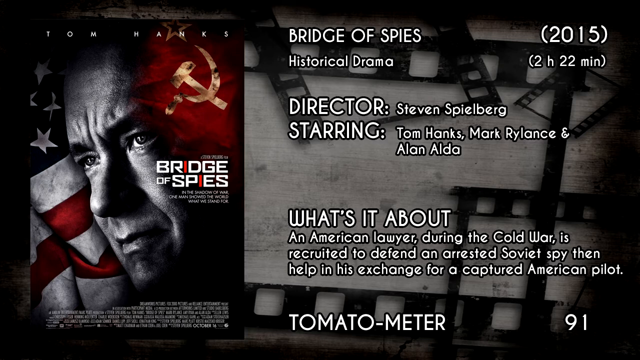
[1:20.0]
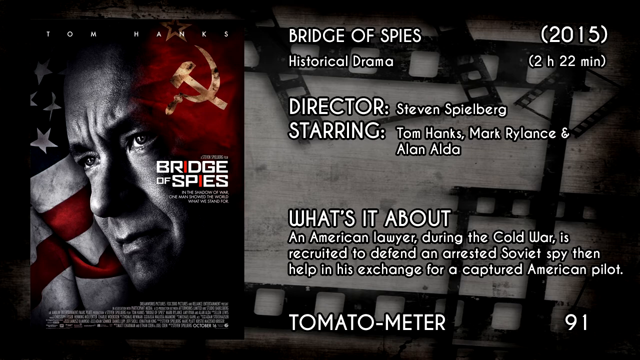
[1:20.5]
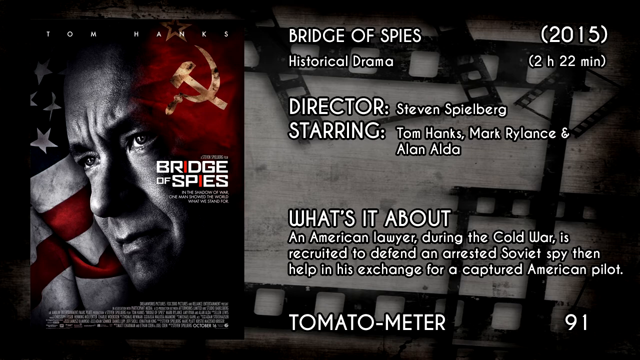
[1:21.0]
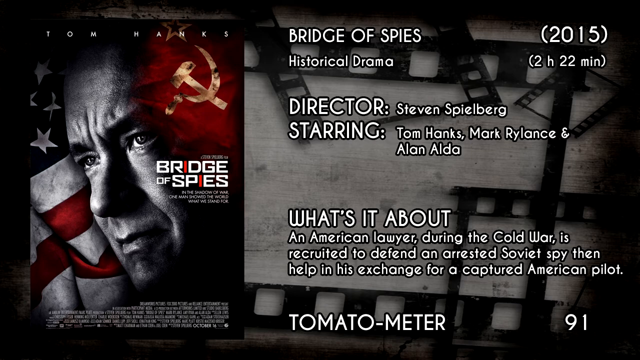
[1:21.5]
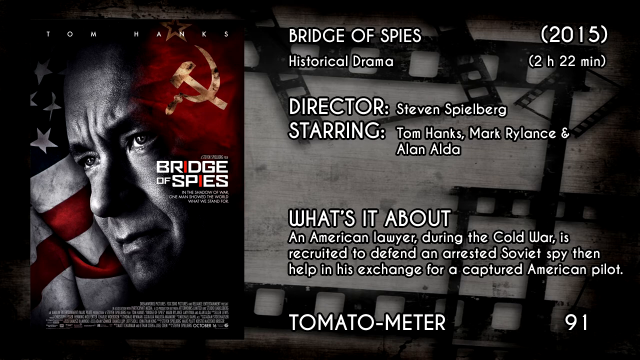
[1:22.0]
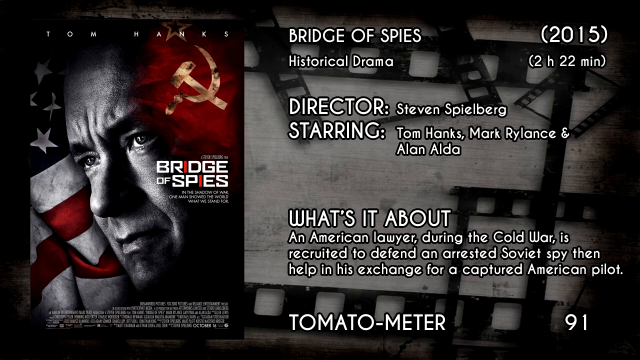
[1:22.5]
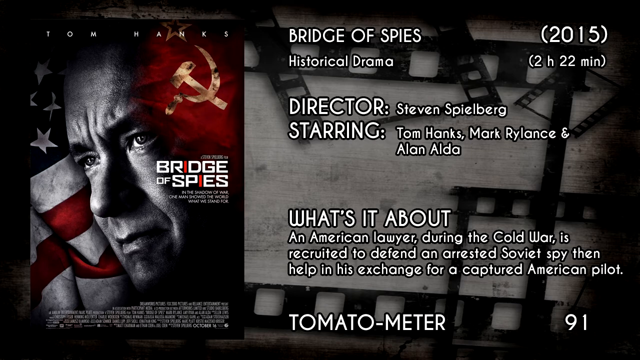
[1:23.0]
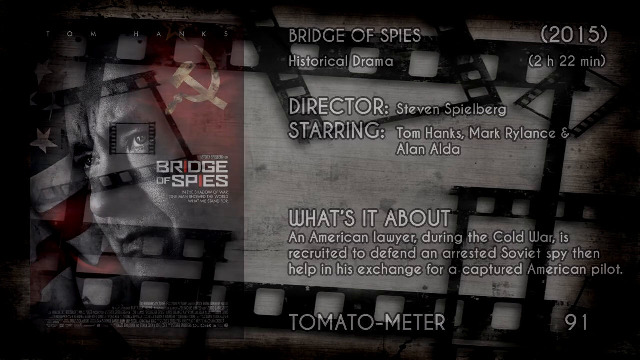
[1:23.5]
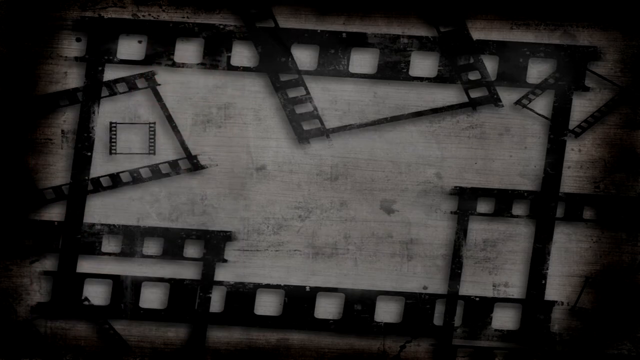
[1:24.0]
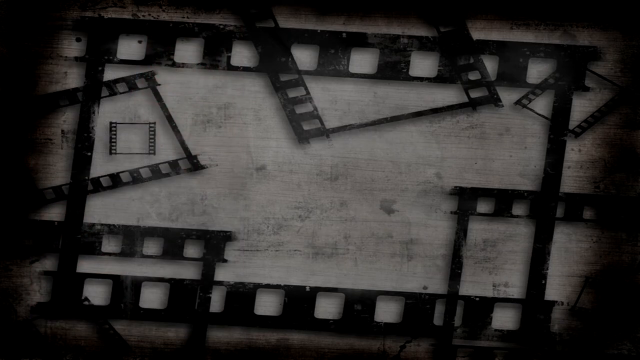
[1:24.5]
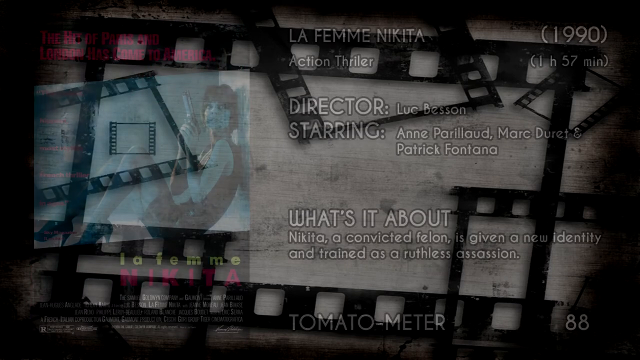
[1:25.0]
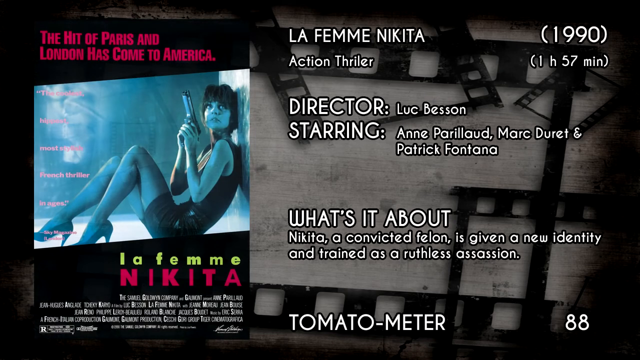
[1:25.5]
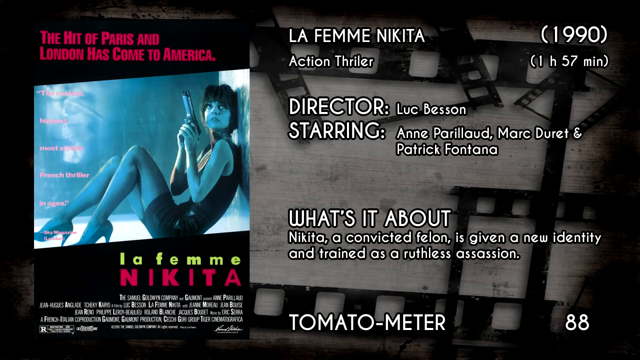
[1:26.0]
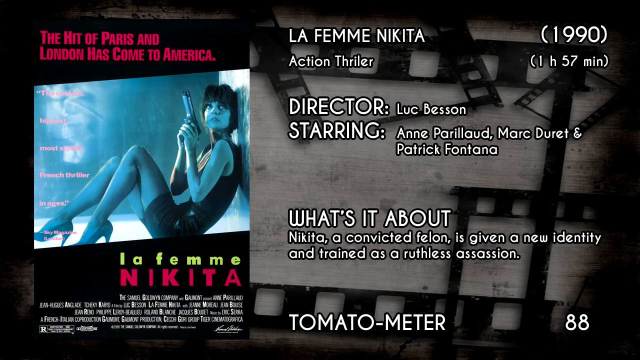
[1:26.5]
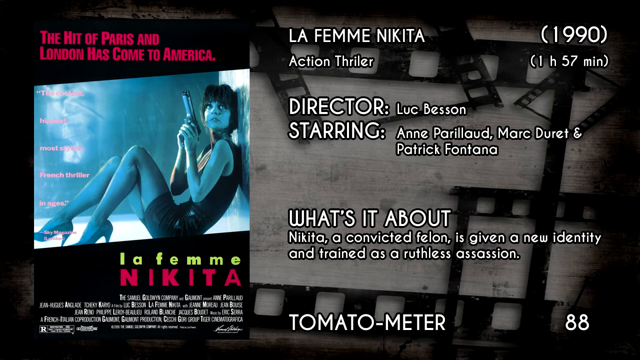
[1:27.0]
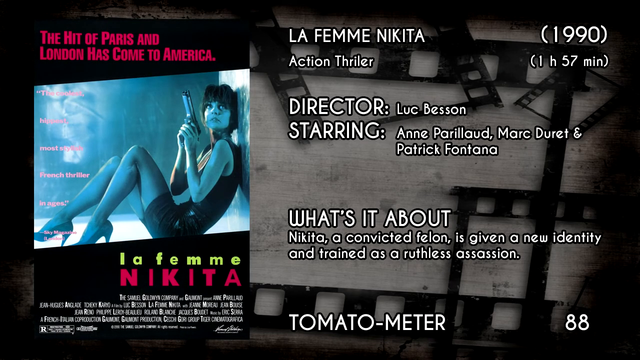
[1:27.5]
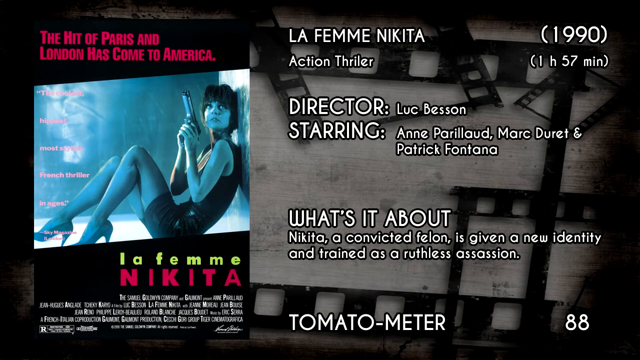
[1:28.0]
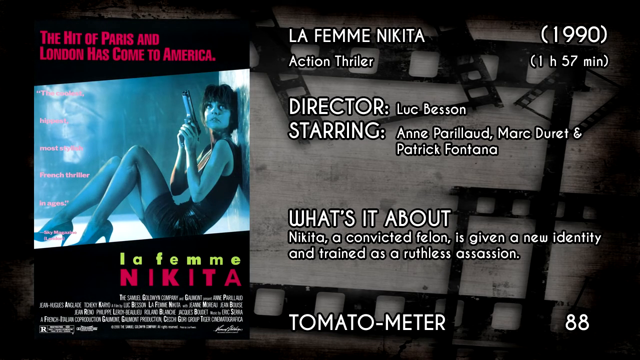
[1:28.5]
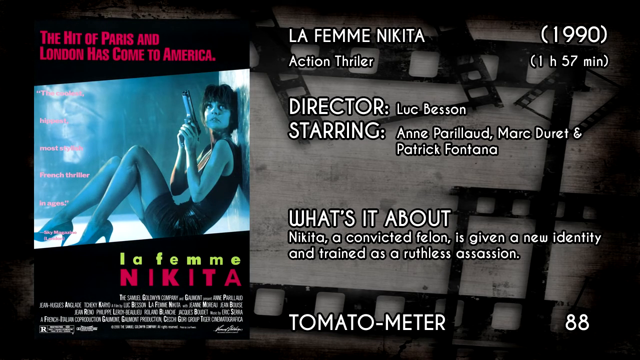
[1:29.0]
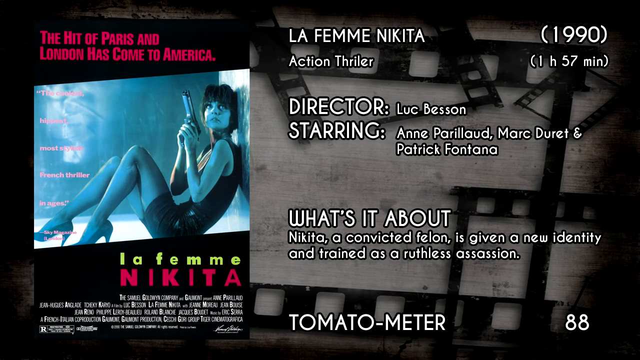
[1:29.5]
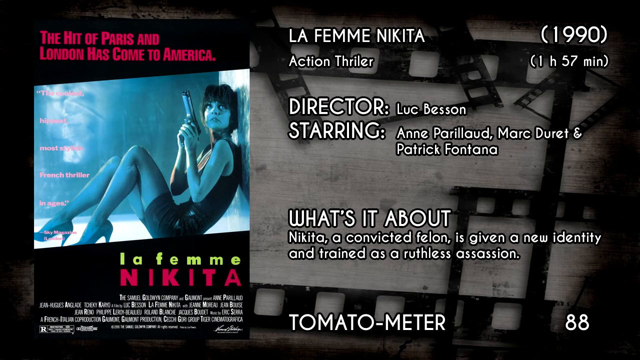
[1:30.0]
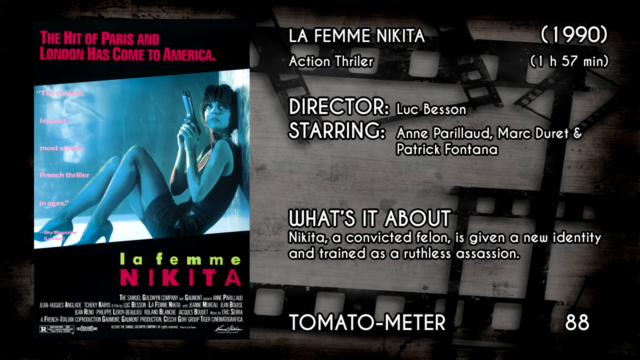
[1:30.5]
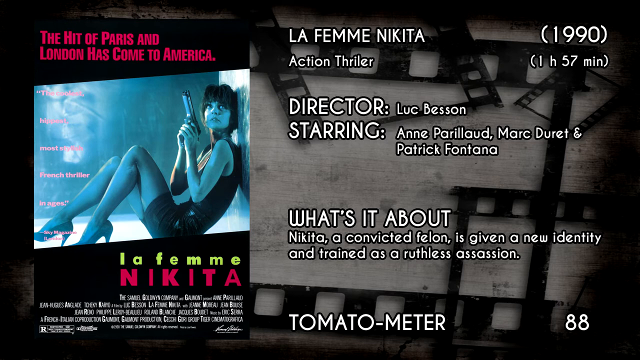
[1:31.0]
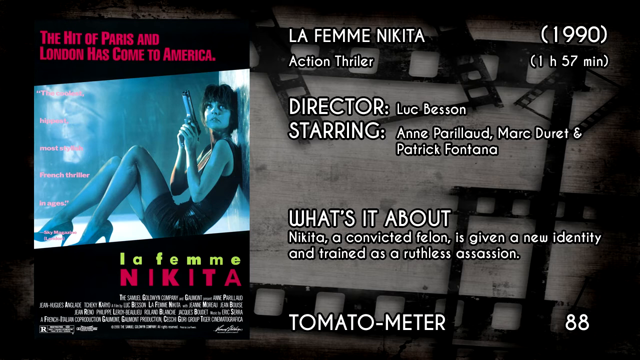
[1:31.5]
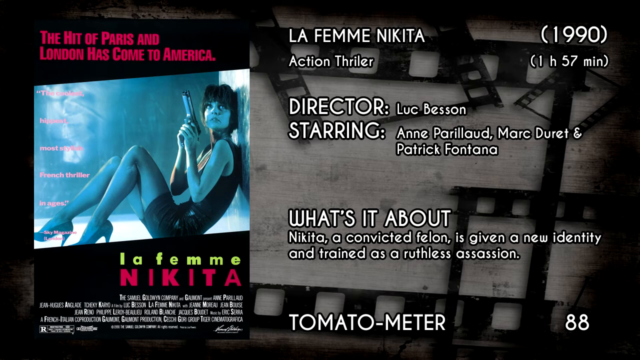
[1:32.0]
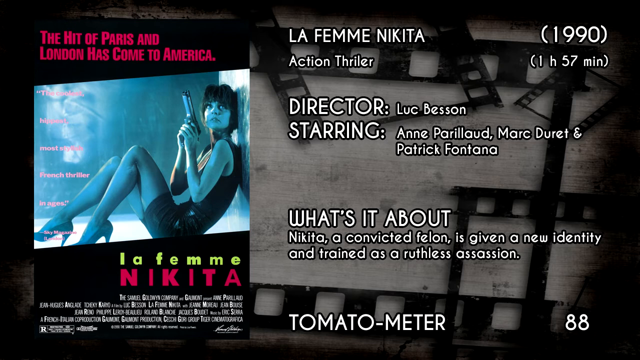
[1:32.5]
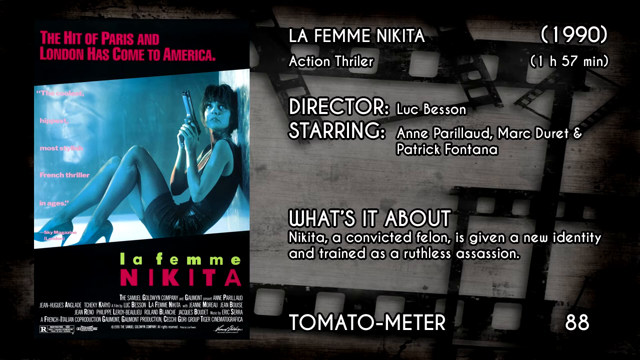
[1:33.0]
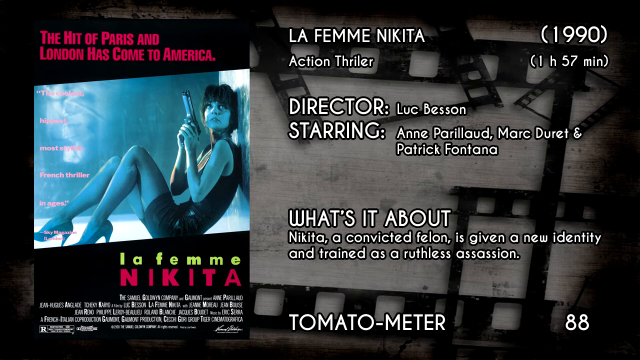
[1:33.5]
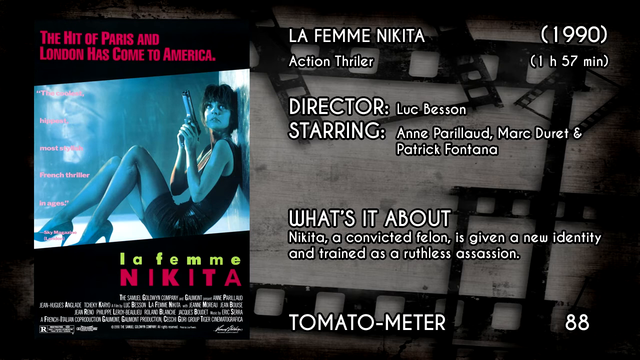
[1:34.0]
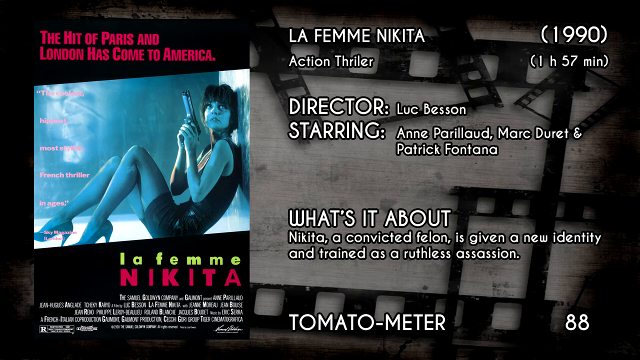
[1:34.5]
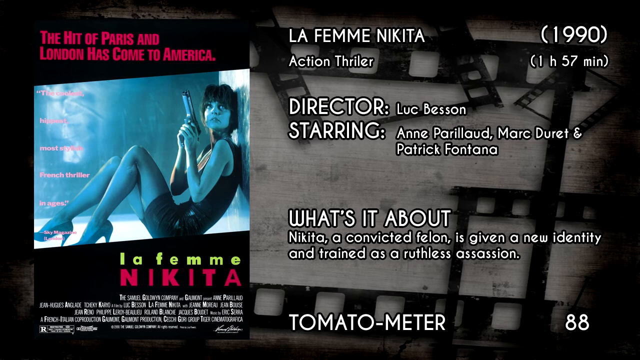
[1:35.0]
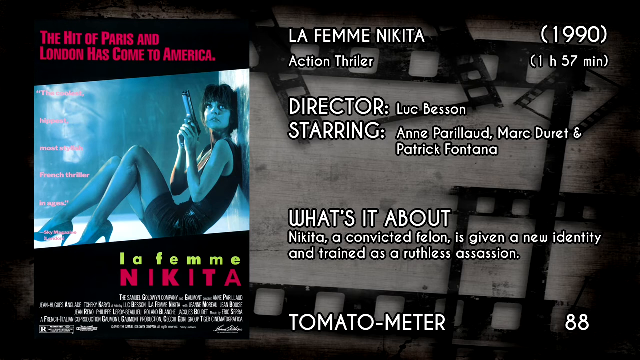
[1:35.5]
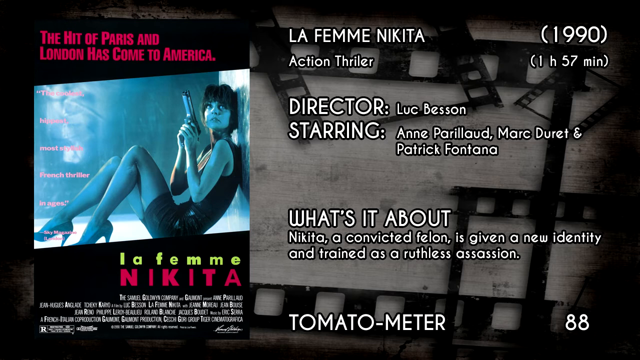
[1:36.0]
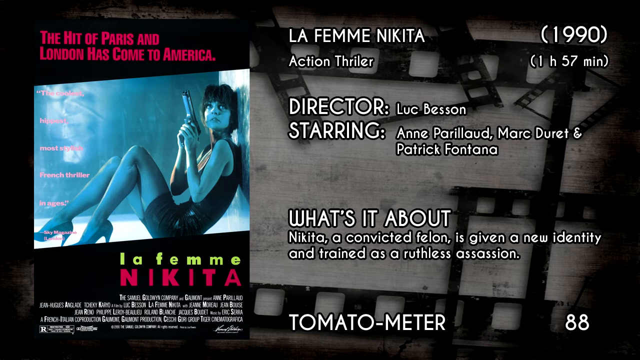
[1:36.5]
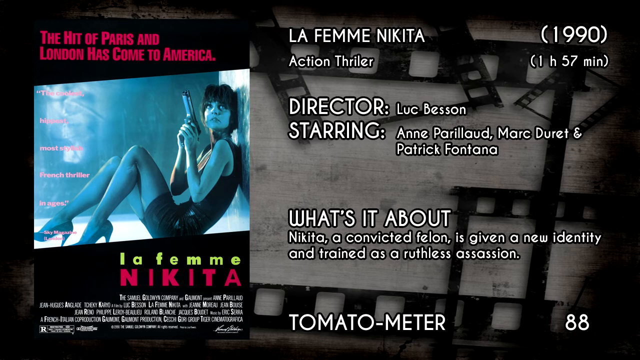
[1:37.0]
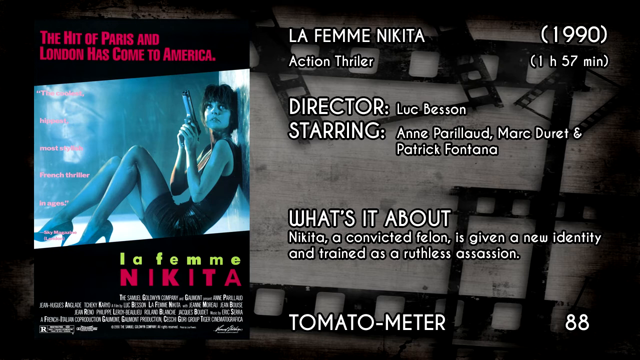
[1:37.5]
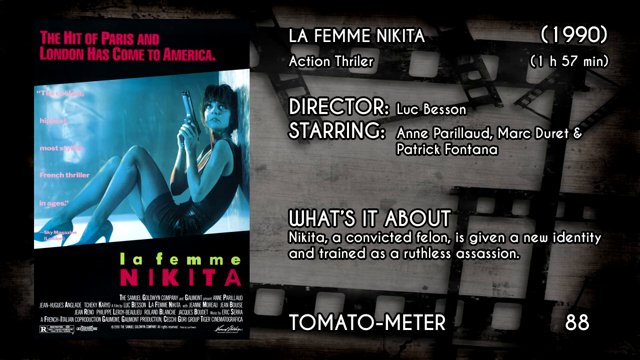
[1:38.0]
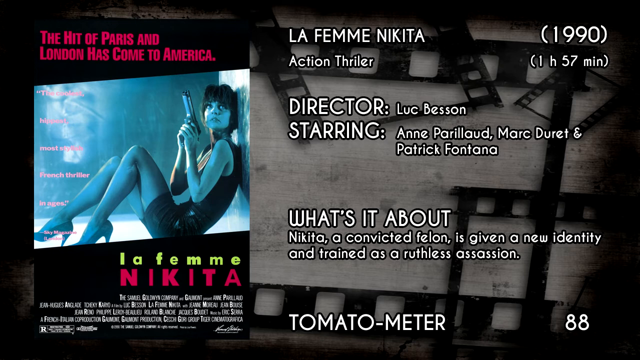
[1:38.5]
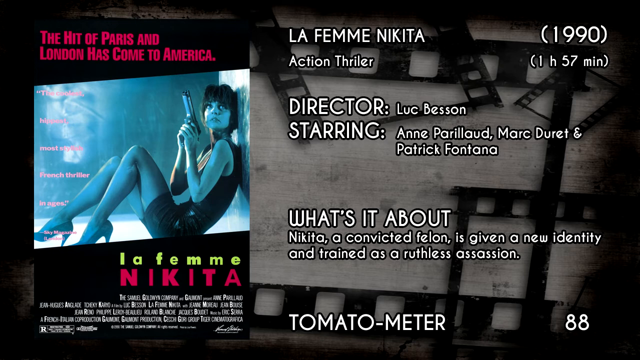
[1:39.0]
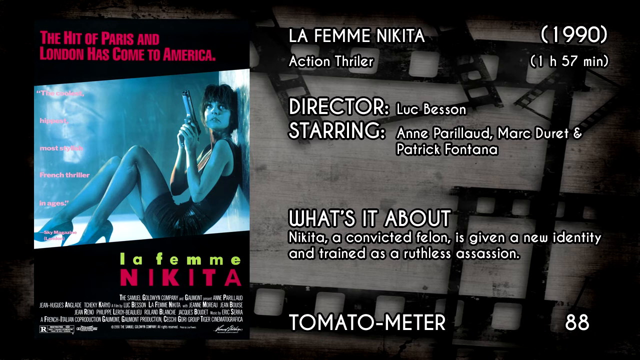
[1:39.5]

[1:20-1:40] Bridge of Spies stays on screen for a while, then a new movie appears: Le Femme Nikita, 1990, action thriller, 1 hour 57 minutes, director Luke Besson, starring Annie Polaroid, Mark Durant and Patrick Fontana. Under "What's it about?" it reads "Nikita, a convicted felon, is given a new identity and trained as a ruthless assassin." A Tomato Meter label is shown. The poster on the left says "the head of Paris and London has come to America" and shows a woman in a black dress and high heels sitting on the ground with her legs up, holding a pistol with both hands close to her face. Each actor is listed in pink on the left side of the poster, and the title's first part is in yellow while "Nikita" is in pink, matching the rest of the font on the poster.